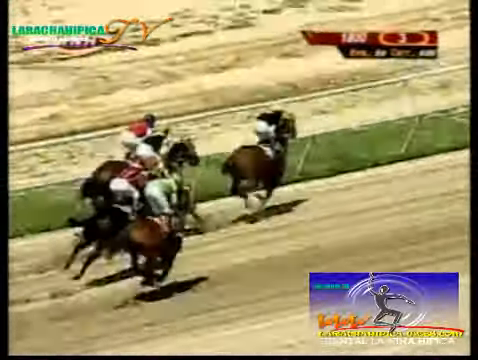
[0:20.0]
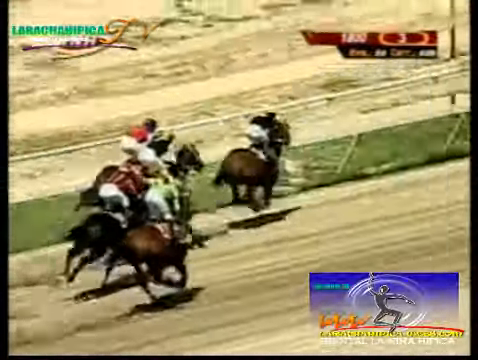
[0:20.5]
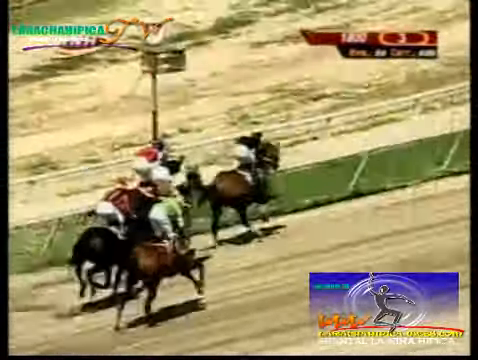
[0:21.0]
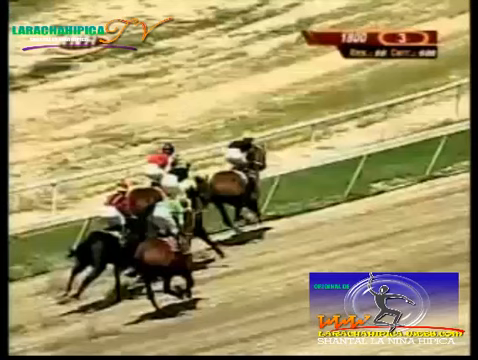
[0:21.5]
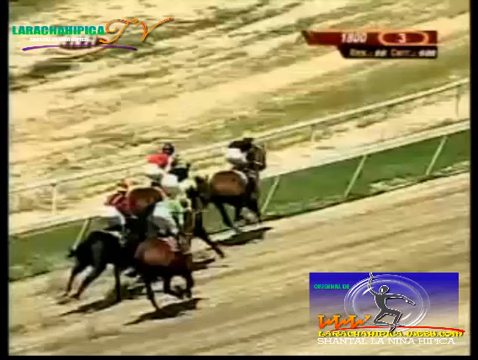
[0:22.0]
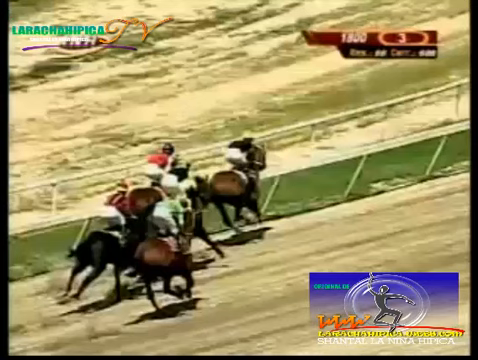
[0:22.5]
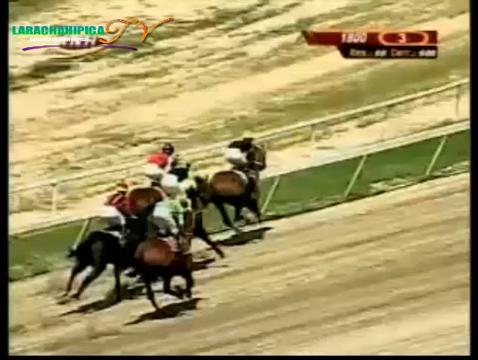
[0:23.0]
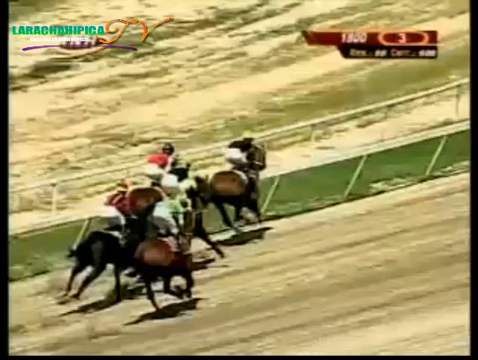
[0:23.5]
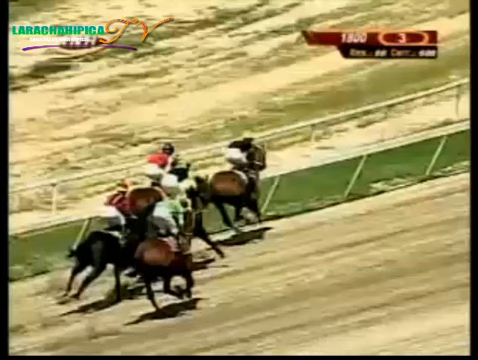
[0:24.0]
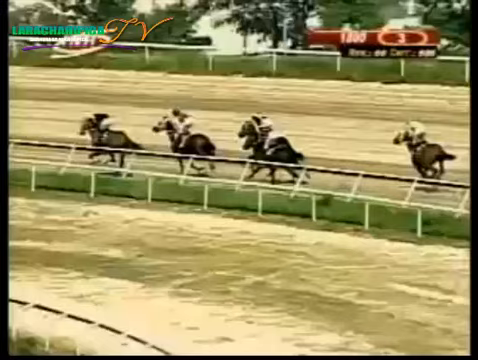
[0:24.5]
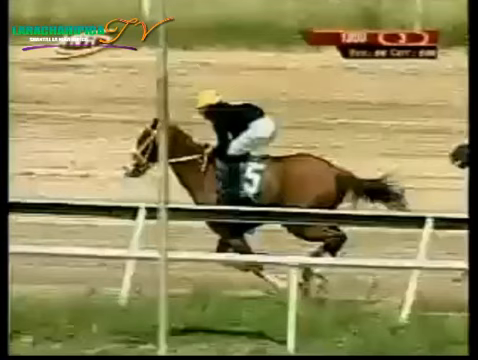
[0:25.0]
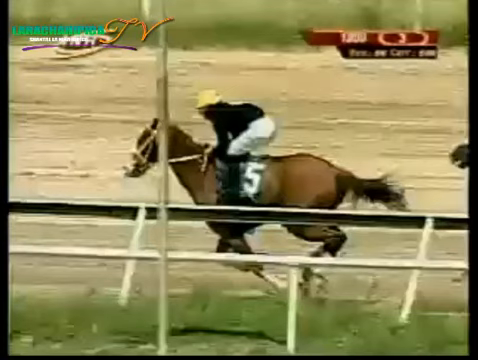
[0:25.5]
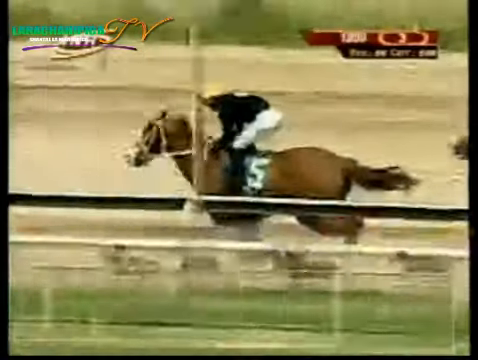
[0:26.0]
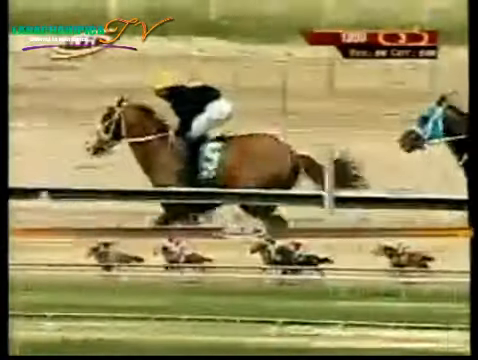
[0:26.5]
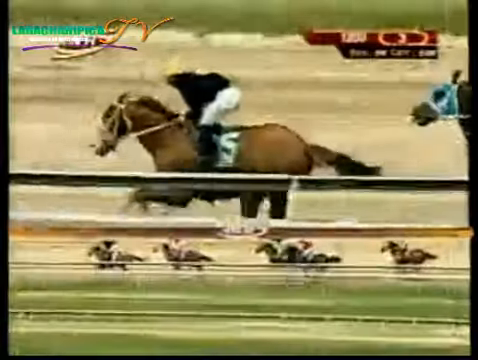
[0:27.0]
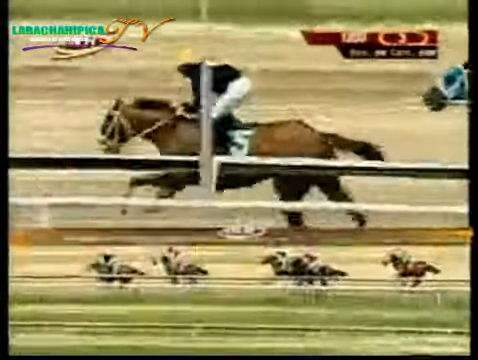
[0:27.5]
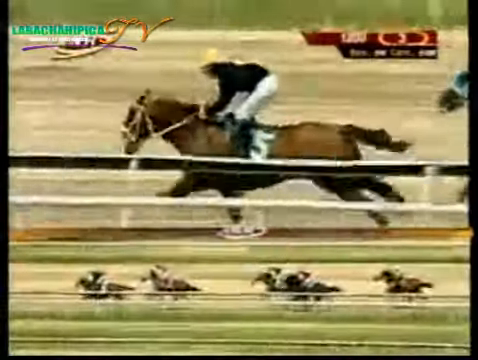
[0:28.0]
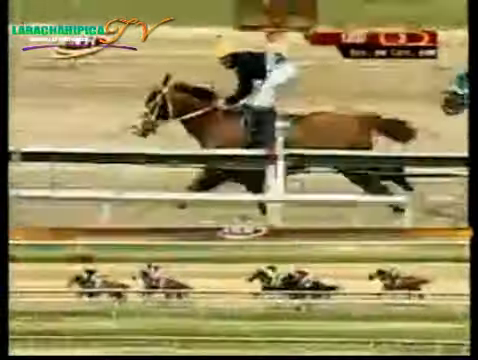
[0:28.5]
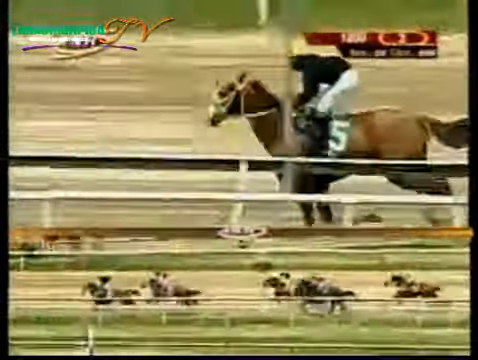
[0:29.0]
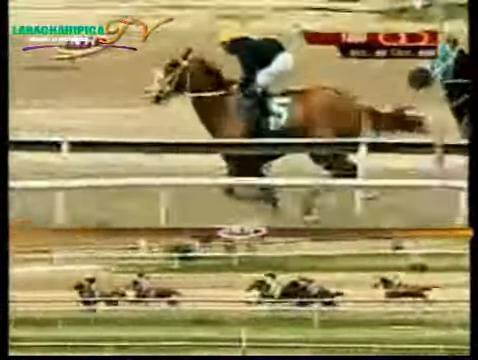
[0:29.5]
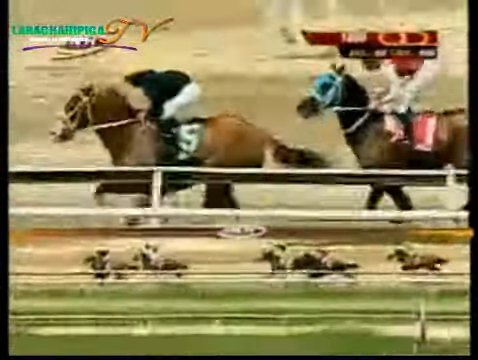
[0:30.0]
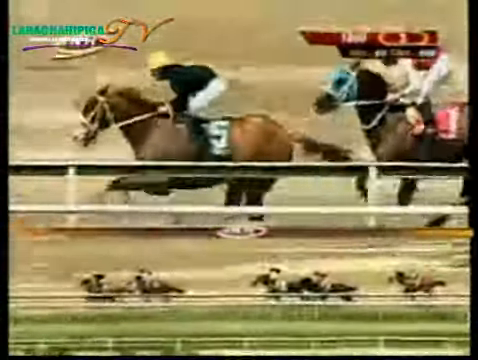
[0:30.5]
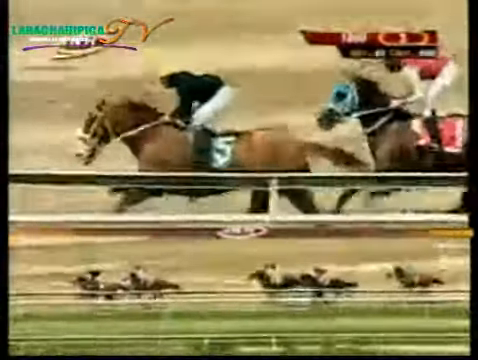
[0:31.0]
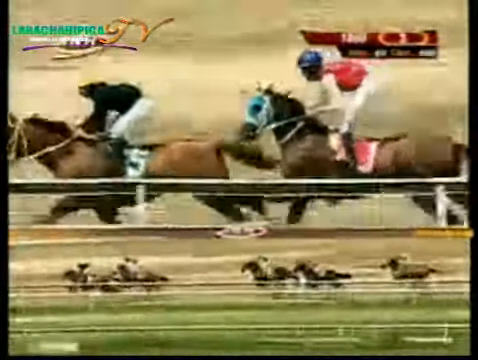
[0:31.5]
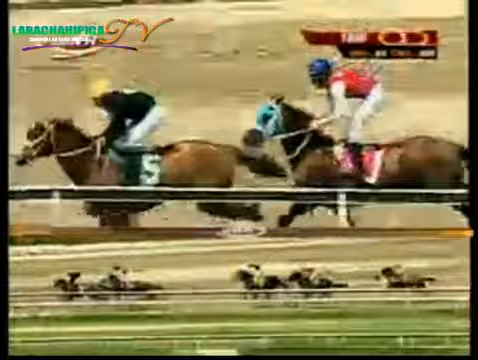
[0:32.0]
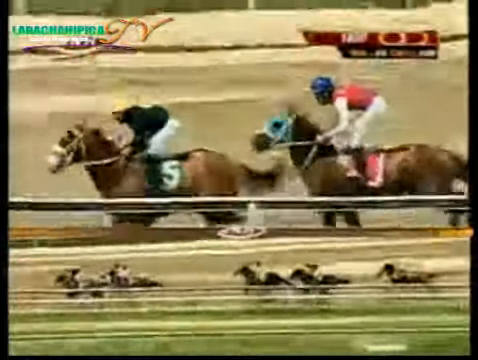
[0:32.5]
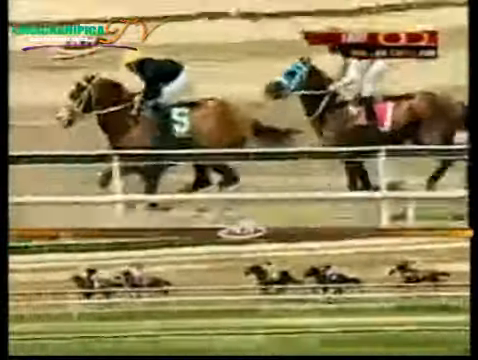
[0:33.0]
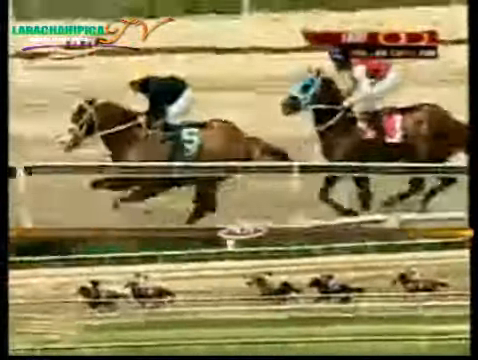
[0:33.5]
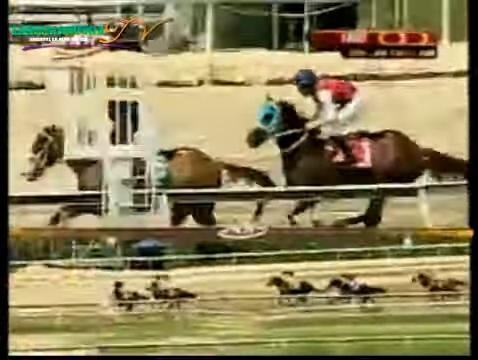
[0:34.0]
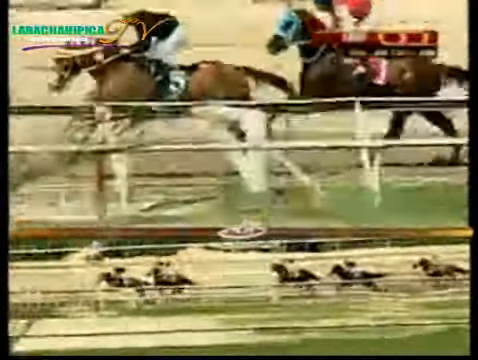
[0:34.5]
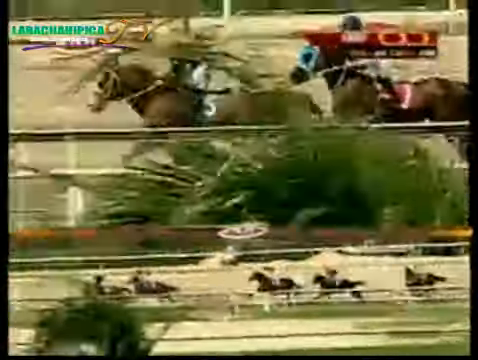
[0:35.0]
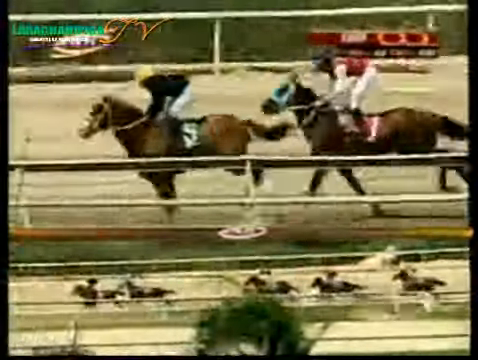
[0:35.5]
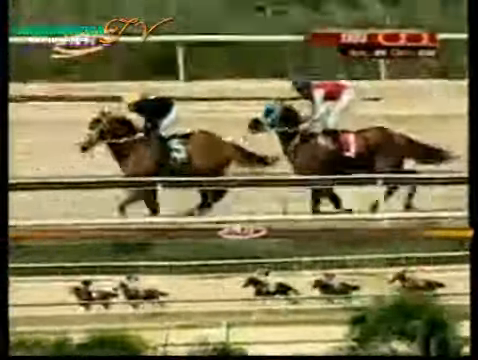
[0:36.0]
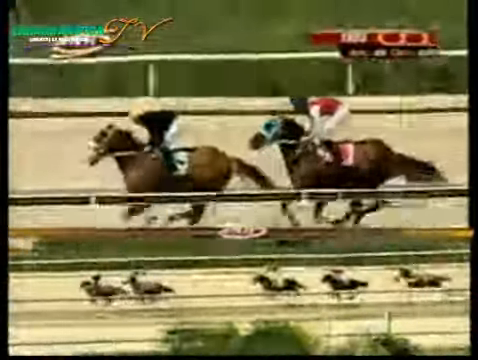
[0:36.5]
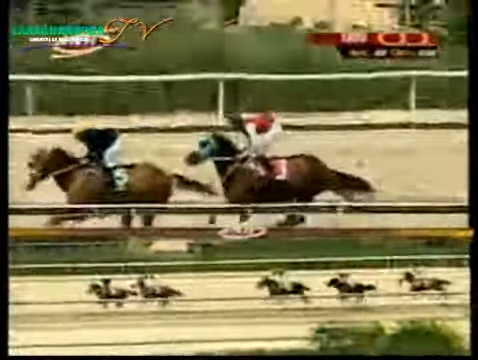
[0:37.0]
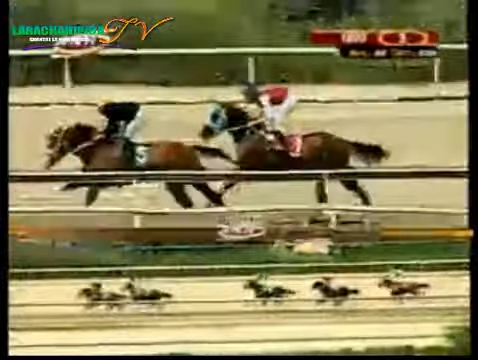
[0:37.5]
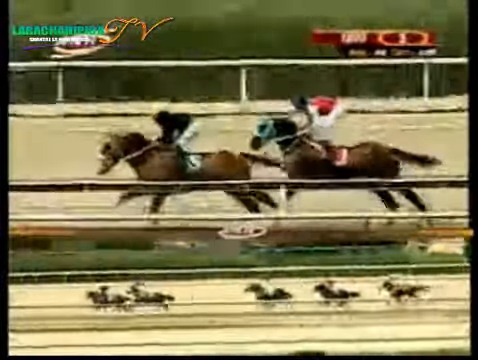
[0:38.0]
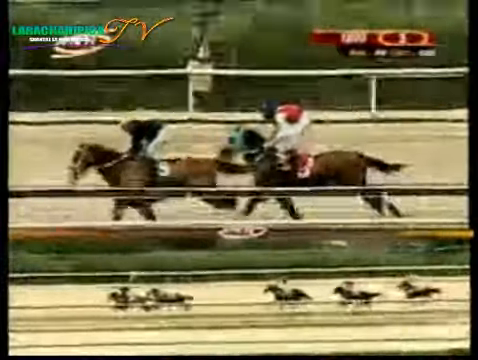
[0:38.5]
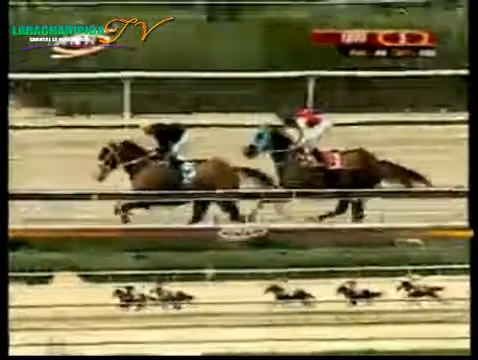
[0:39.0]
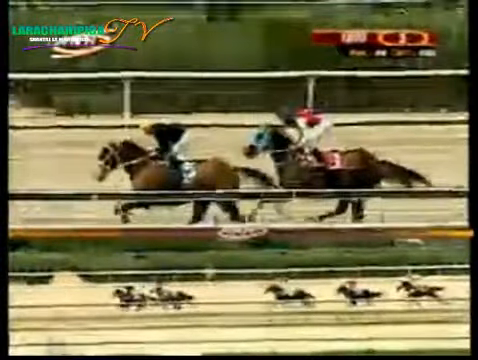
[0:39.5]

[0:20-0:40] The horse race continues on what is a broadcast from a Spanish channel. In the top right corner there appears to be the number "3" inside a gold ring, and in the bottom right corner there is a stamp. The video pauses momentarily, and the next shot appears to be zoomed in on the horses. Number five is in the lead, a light brown horse running pretty fast with a rider in a black shirt. Right behind it is a horse that appears to have a blue mask on and possibly a pink tag, with a rider in a reddish pink shirt. The bottom of the screen shows a long-distance view of the five horses and where they are on the track, with a clear leader followed by clear second, third, fourth and fifth places.